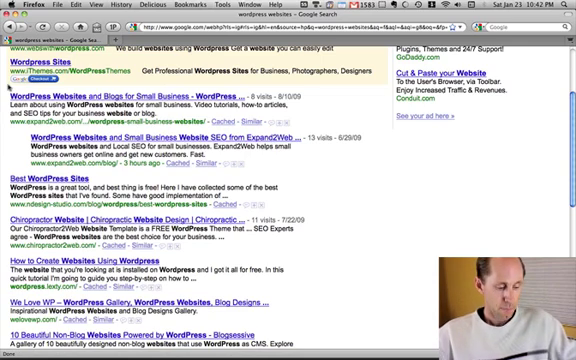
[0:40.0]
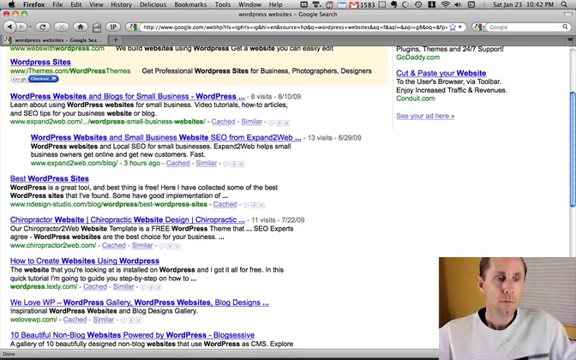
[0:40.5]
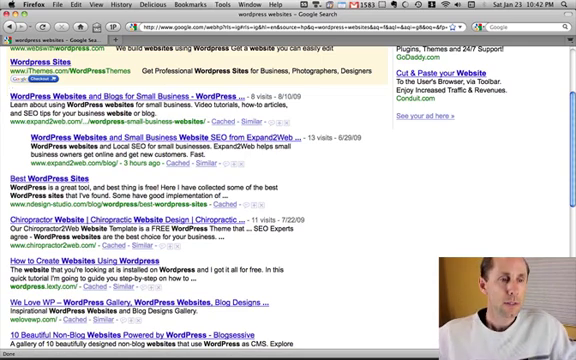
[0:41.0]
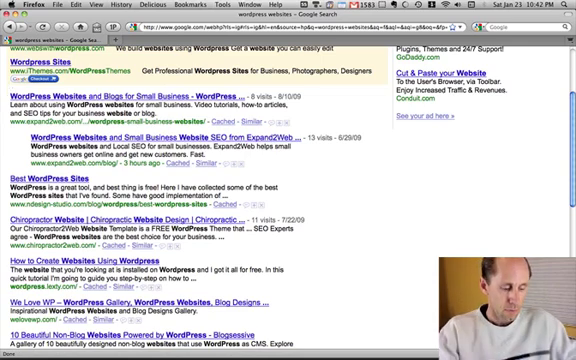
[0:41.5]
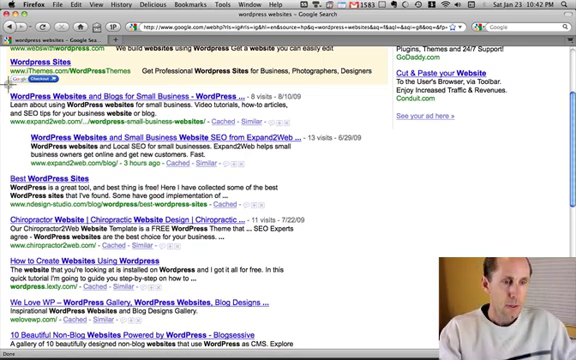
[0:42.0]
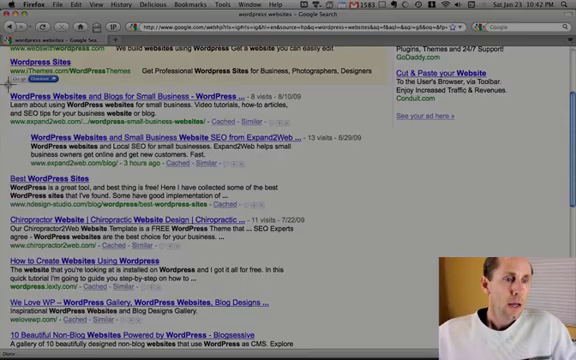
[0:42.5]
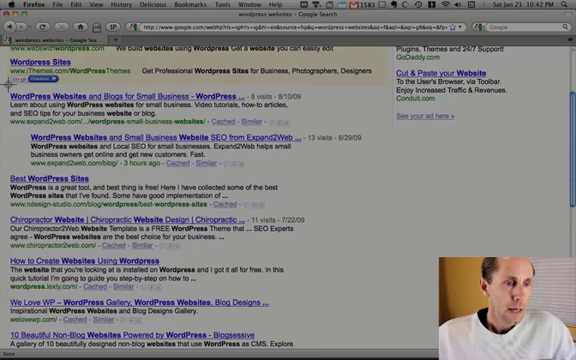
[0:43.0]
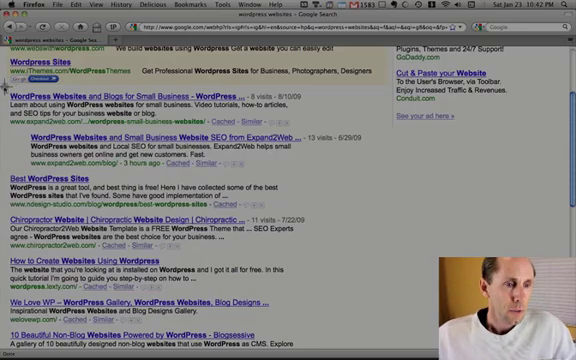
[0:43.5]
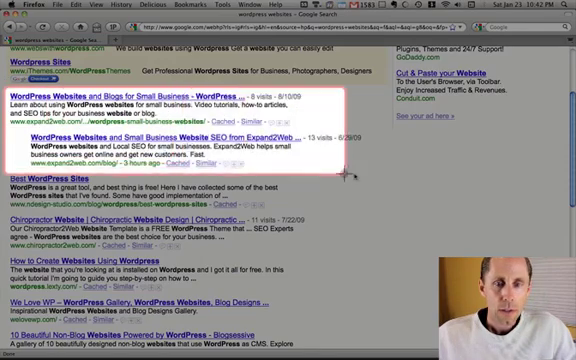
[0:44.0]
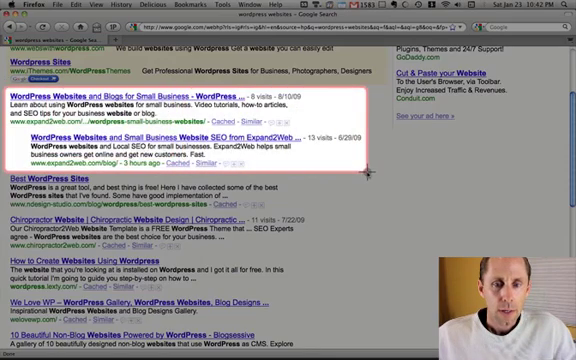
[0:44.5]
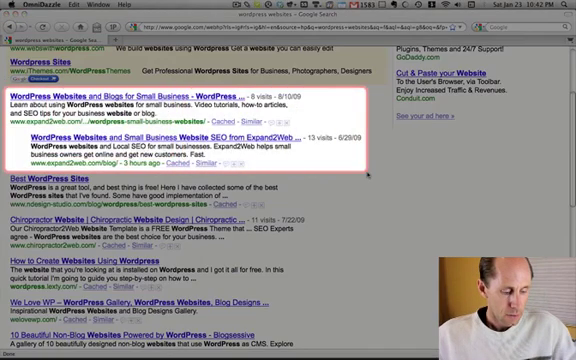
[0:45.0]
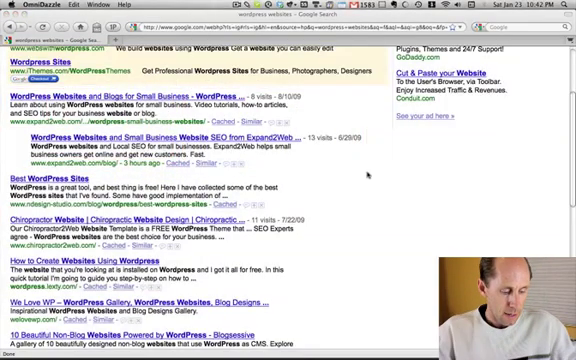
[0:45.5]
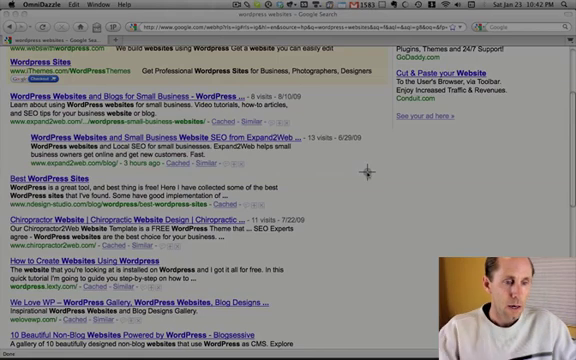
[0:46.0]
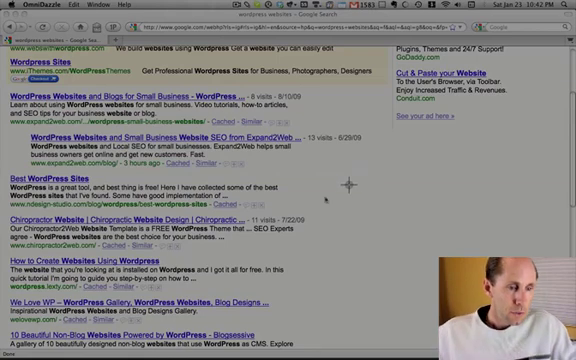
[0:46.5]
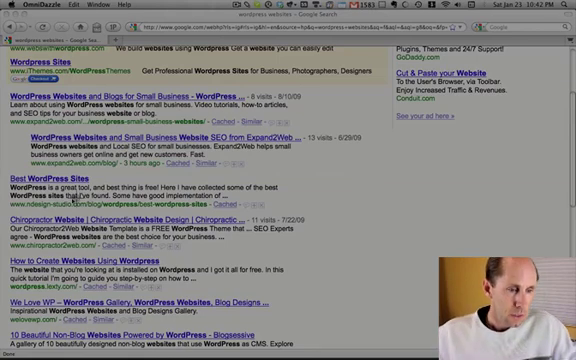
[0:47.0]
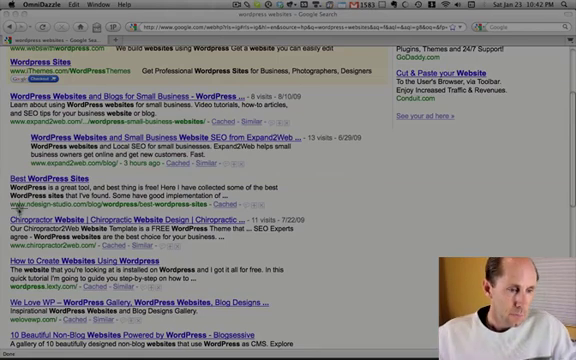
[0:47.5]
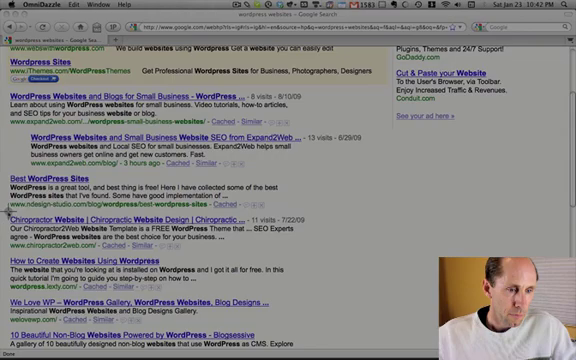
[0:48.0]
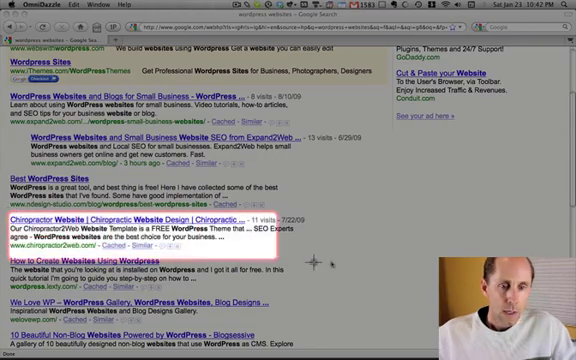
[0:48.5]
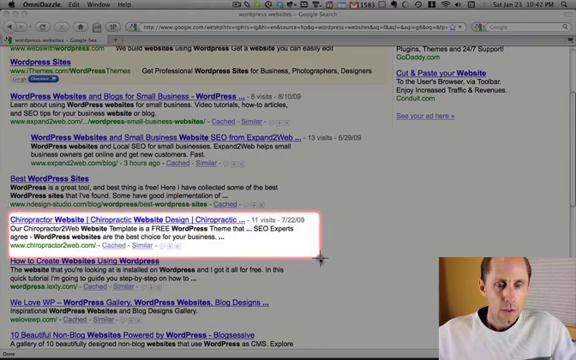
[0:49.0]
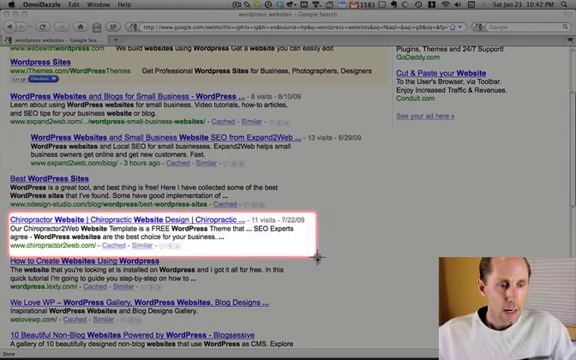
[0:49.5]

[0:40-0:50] The shared screen still shows the search results for WordPress websites while the man continues speaking and moves the mouse around. Using a presentation tool, he highlights different search results: first the top two, "WordPress websites and blogs for small businesses" and "WordPress websites for small business website SEO expand to the web", and then he selects the fourth search result, a chiropractic web design website.